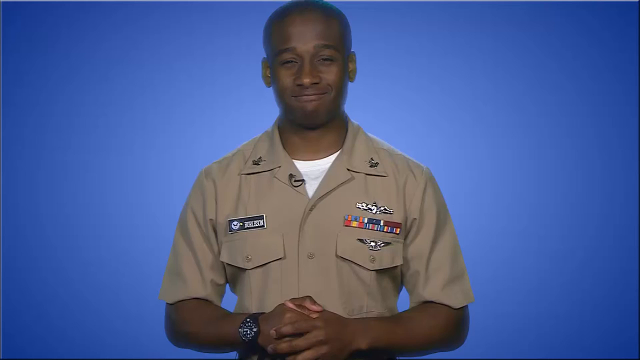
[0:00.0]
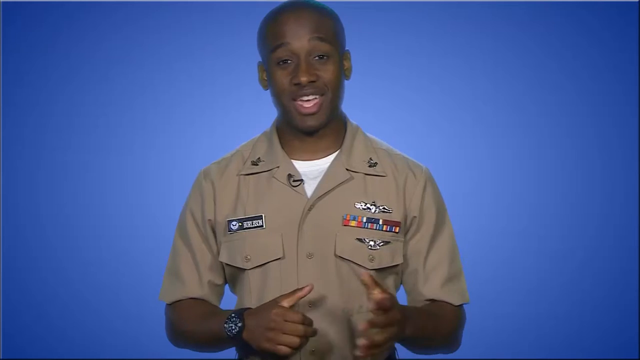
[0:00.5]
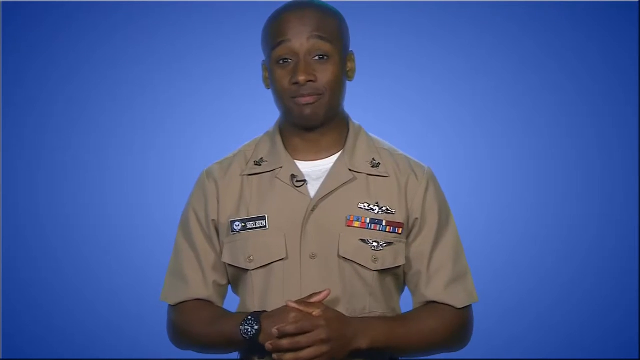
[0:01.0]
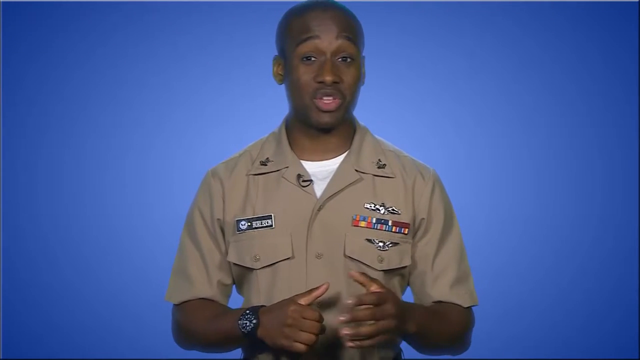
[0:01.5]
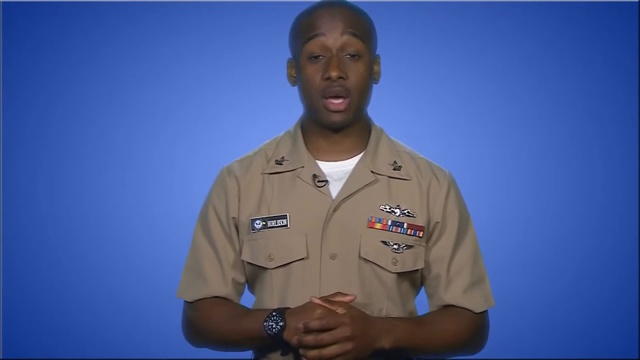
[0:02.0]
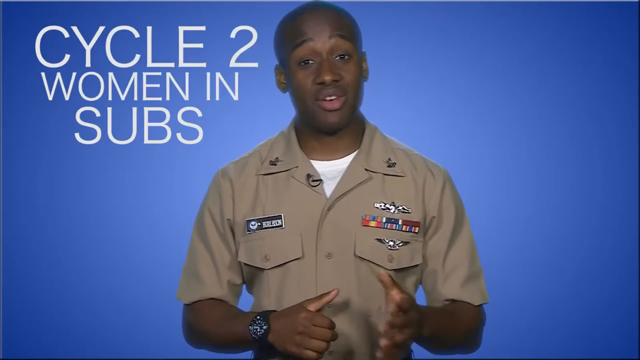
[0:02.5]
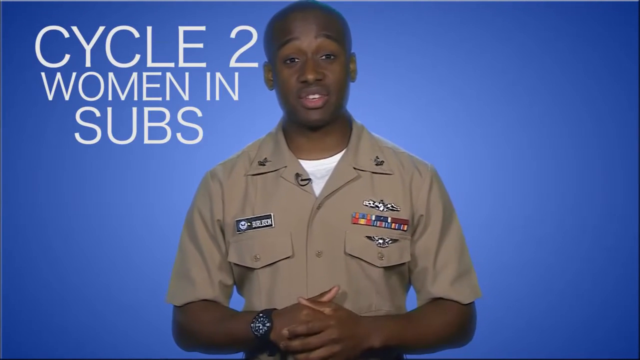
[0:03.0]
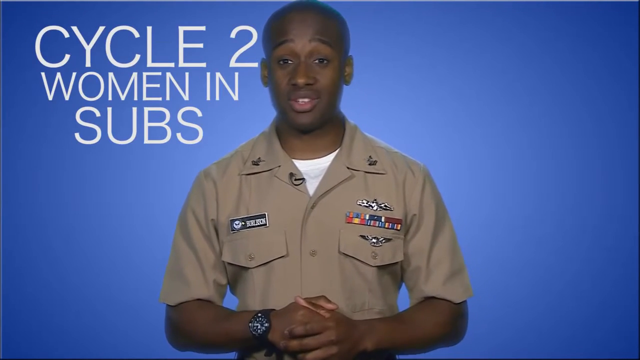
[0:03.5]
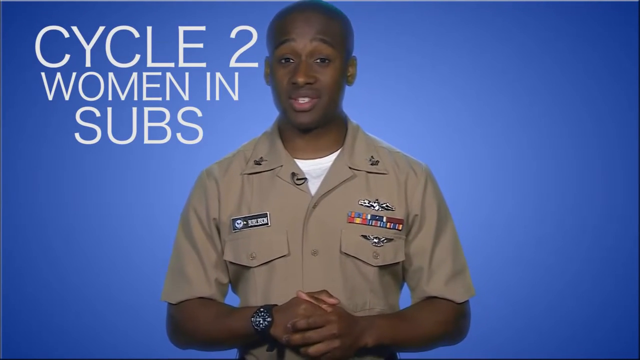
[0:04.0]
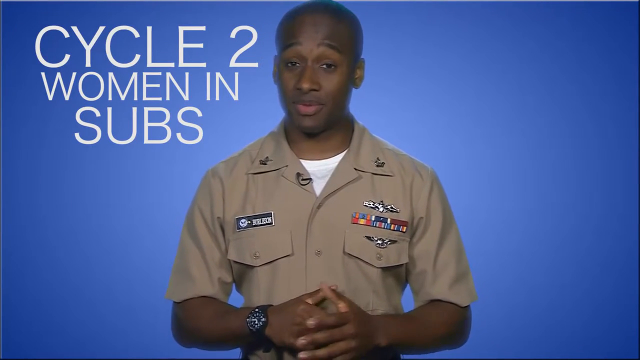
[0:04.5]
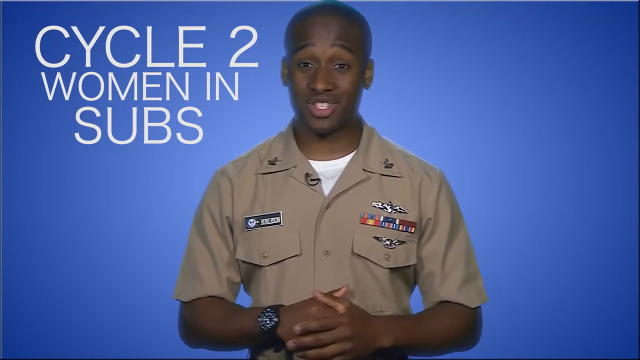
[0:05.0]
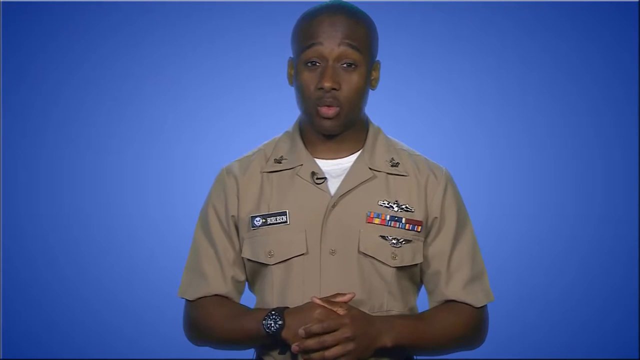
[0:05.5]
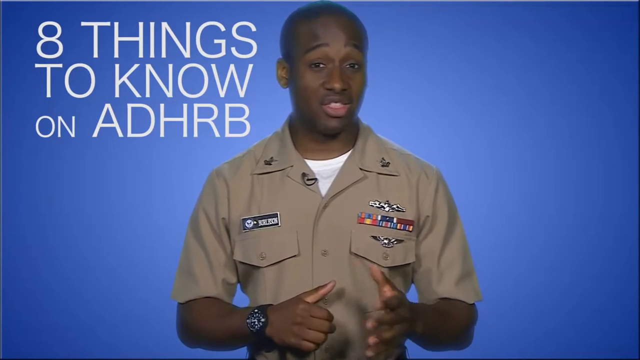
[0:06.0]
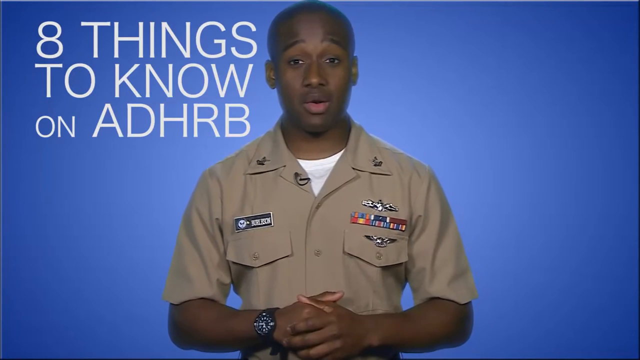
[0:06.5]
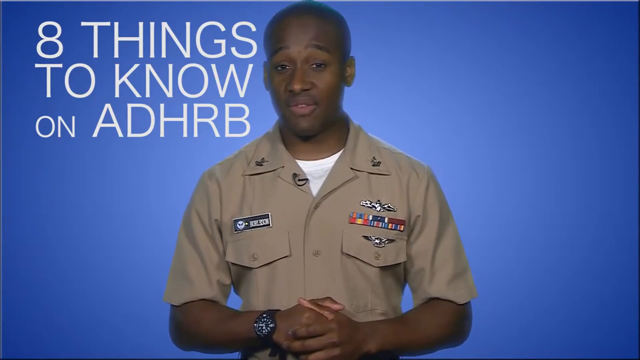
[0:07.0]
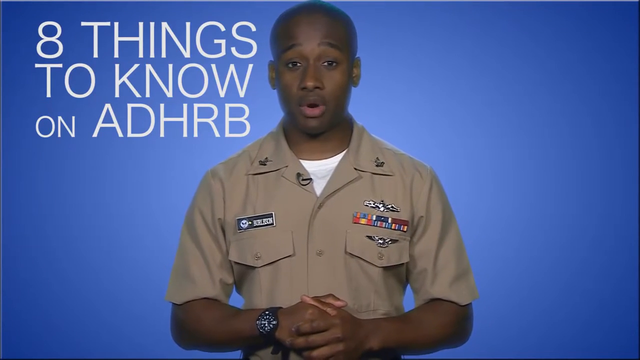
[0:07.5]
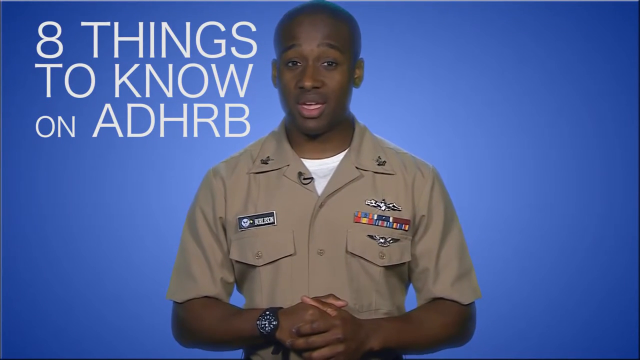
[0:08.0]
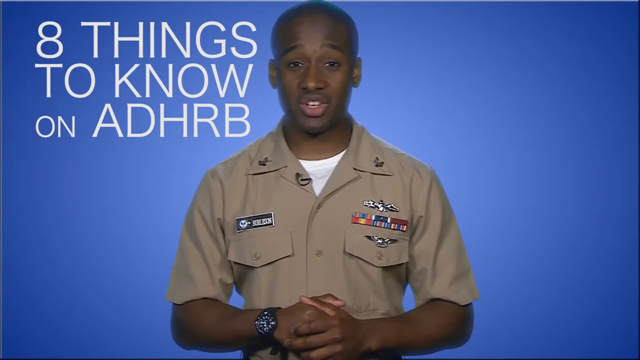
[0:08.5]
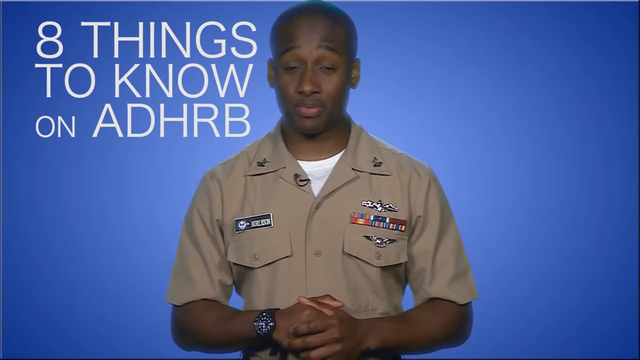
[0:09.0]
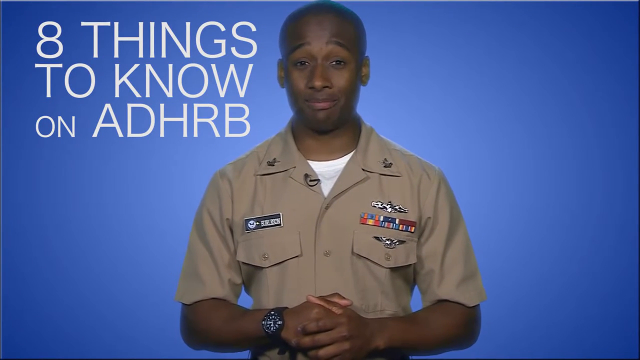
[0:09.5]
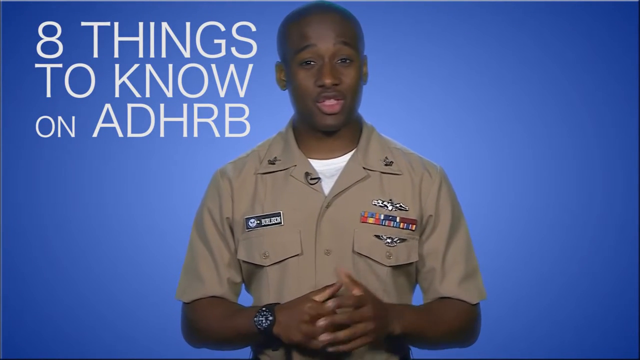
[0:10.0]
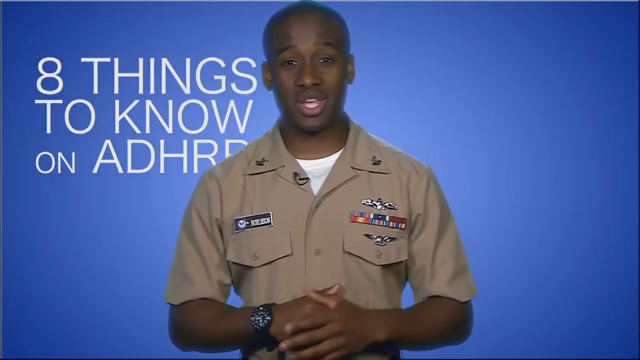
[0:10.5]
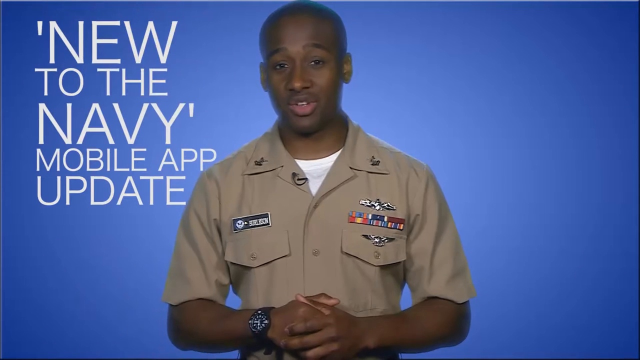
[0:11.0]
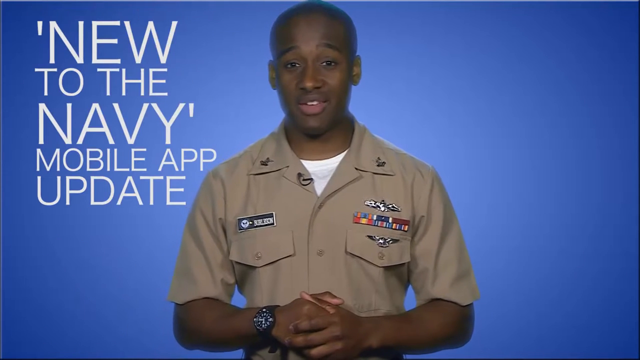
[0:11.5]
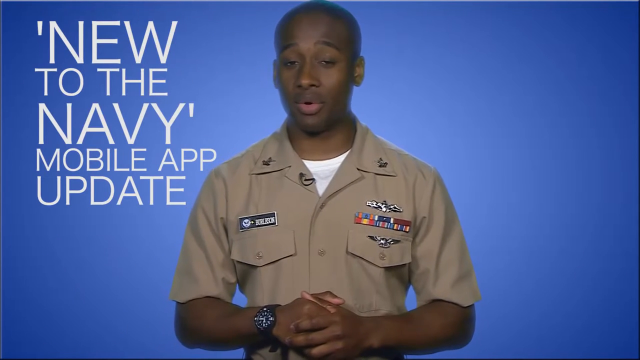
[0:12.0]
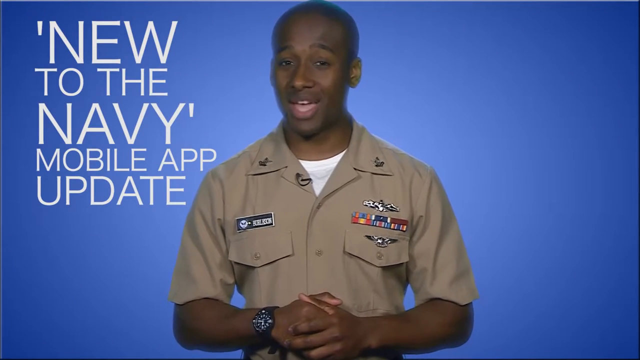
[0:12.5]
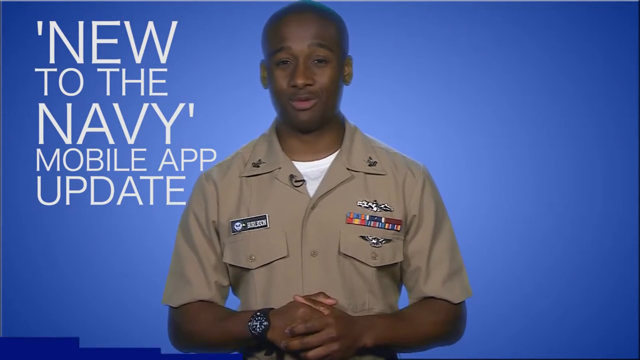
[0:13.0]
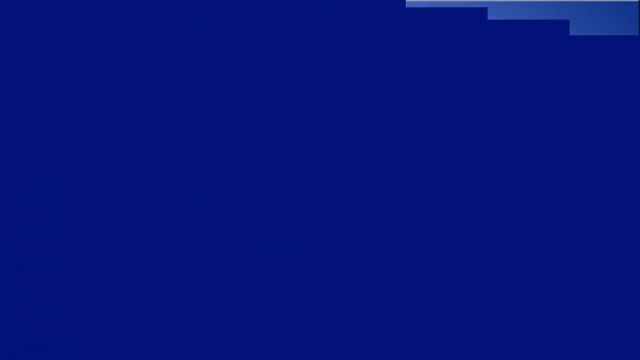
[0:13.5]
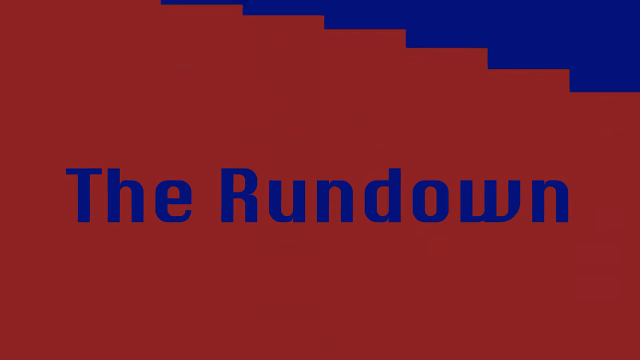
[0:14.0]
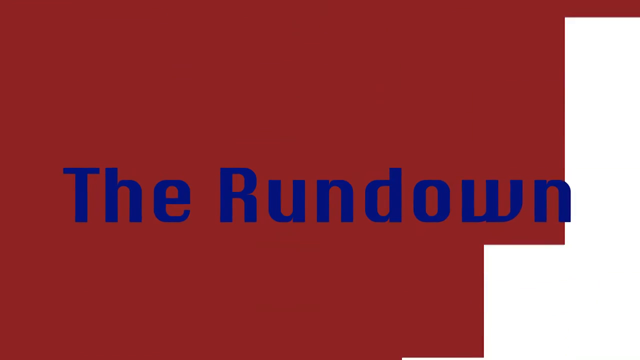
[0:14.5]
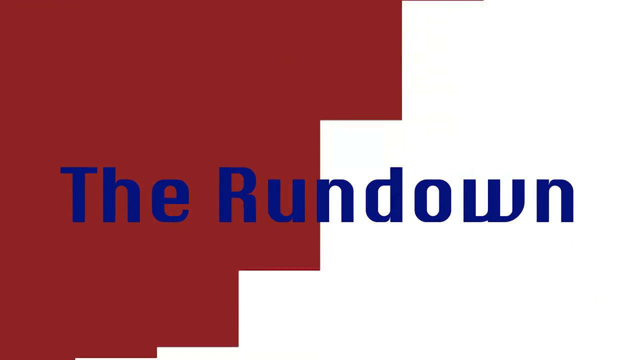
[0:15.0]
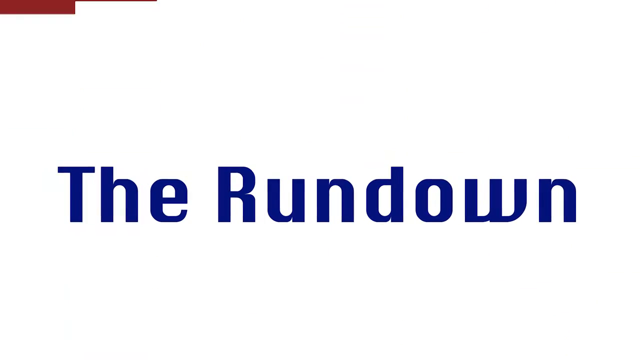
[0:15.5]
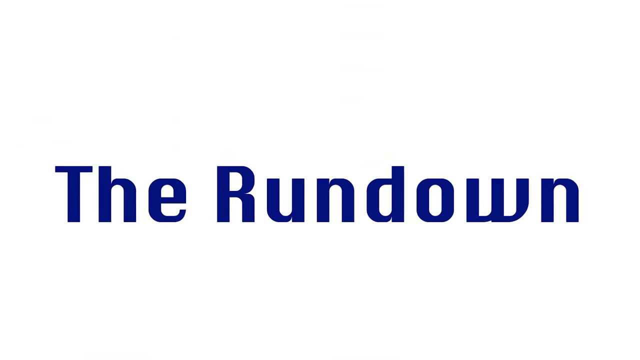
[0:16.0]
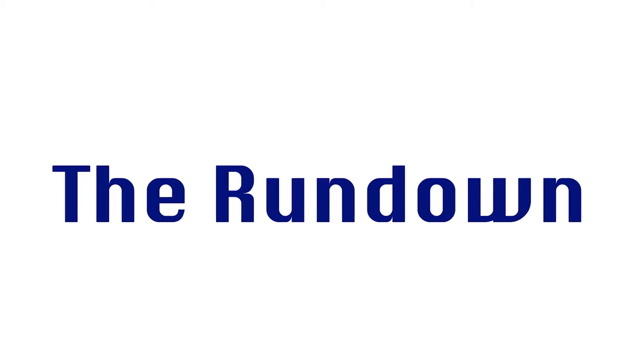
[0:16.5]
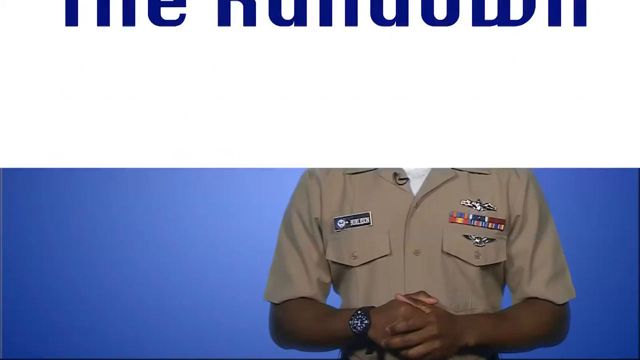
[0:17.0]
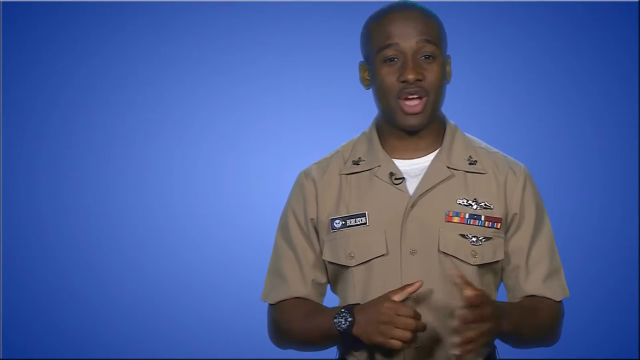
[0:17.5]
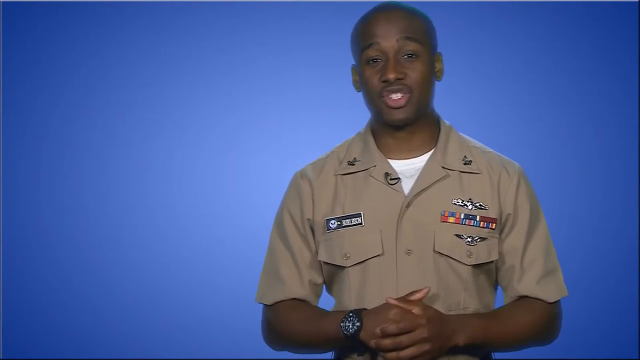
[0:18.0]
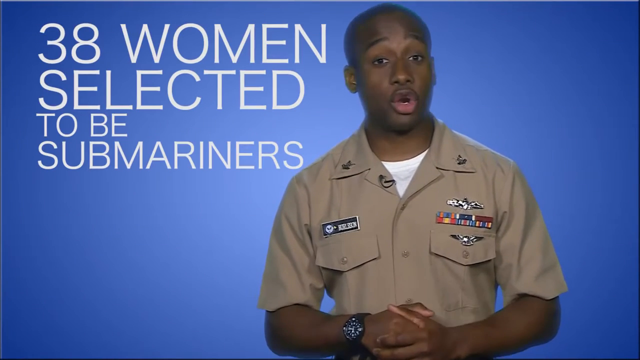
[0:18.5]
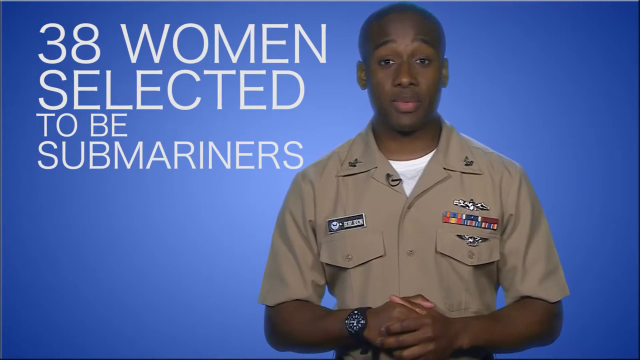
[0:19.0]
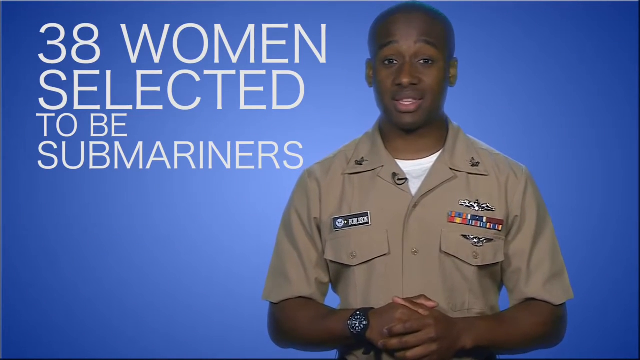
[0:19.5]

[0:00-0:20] The video opens on an ombre blue background that is white and becomes darker blue and black toward the bottom third of the screen. An African-American man stands in the center, smiling. He is dressed in military attire: a short-sleeved tan shirt with multiple award braids over the left pocket, along with what appears to be a wingman's pin over the left pocket. He has pins on both collar lapels and wears a detachable microphone clipped to his collar. Under the tan shirt he wears a white t-shirt. As he talks, his hands are folded and clasped together. Shortly after the video begins, he is talking directly to the camera. White graphic lettering slides in on the left side of the screen, to the right of the man speaking, reading "cycle two women in subs."